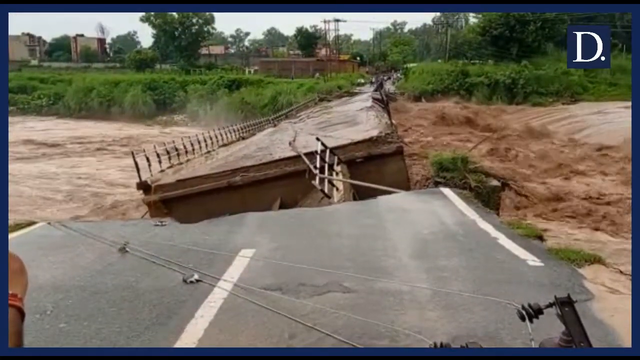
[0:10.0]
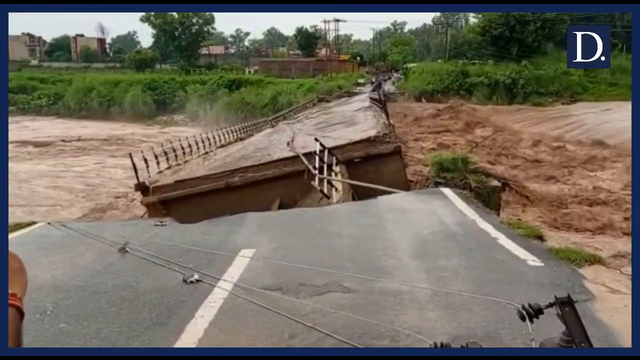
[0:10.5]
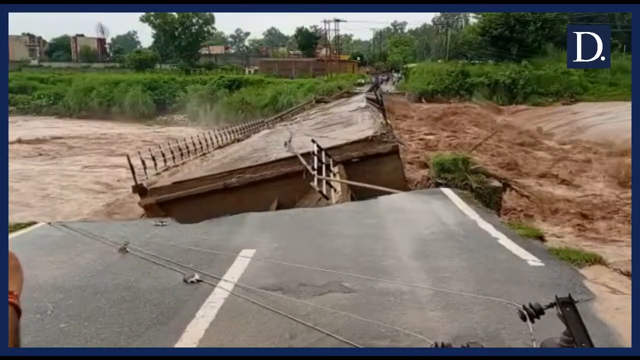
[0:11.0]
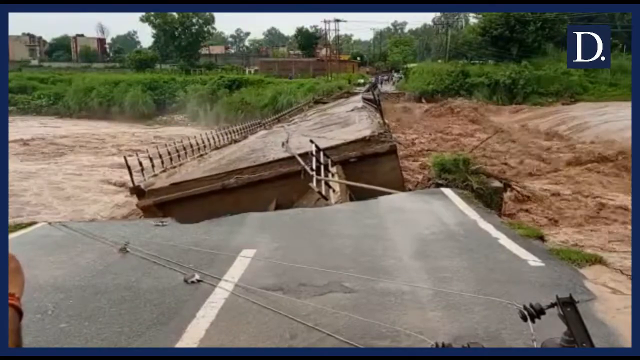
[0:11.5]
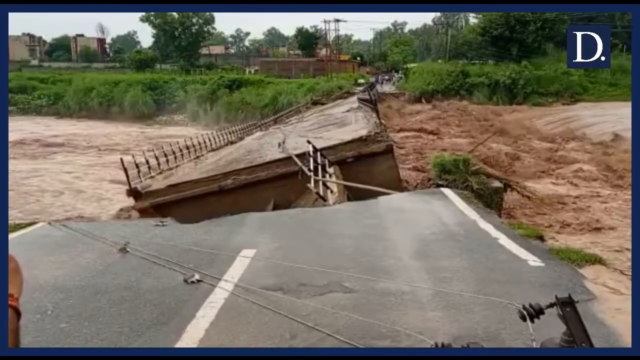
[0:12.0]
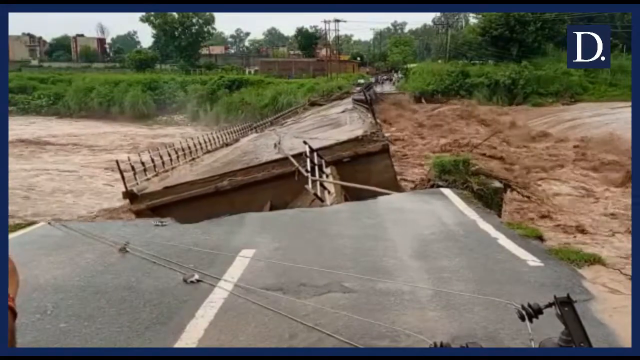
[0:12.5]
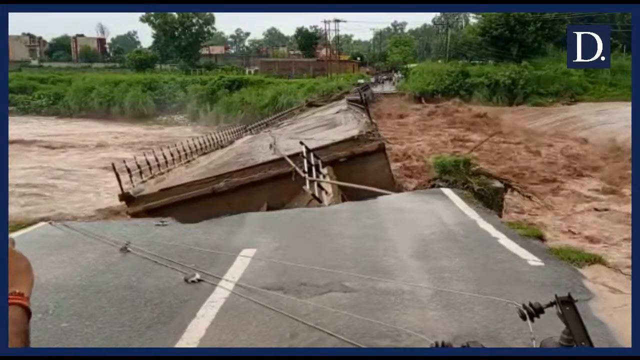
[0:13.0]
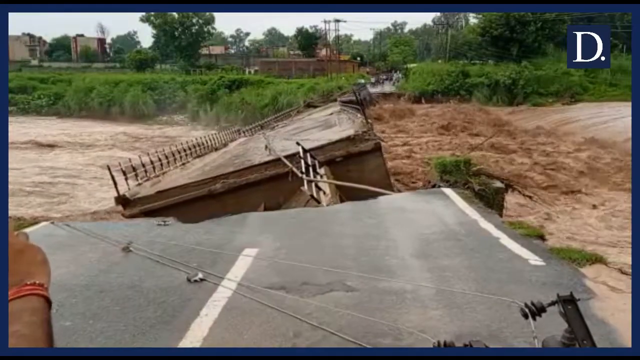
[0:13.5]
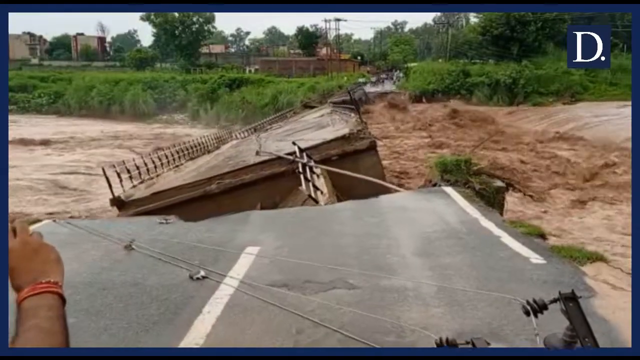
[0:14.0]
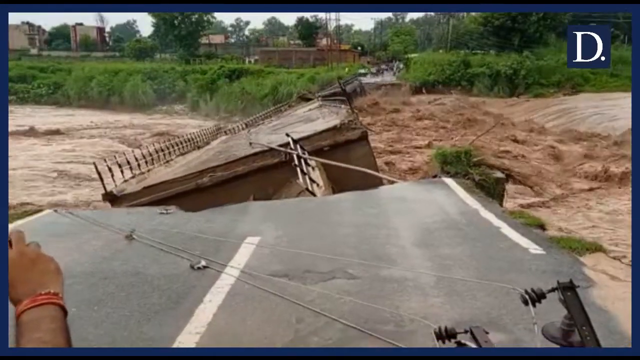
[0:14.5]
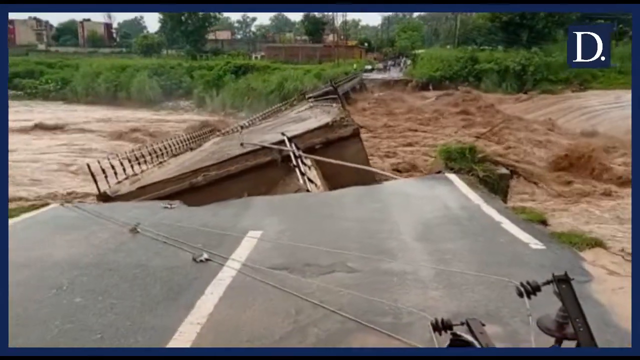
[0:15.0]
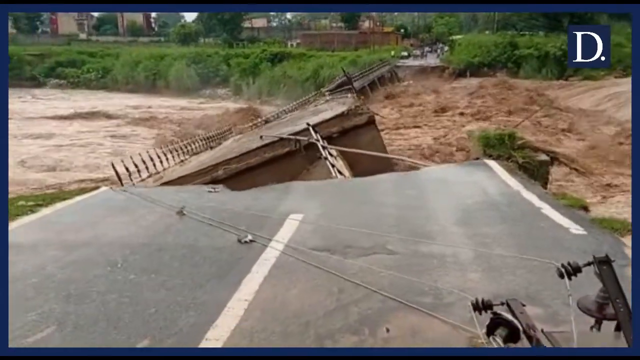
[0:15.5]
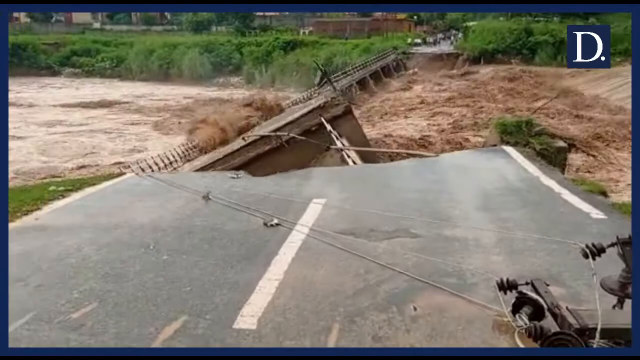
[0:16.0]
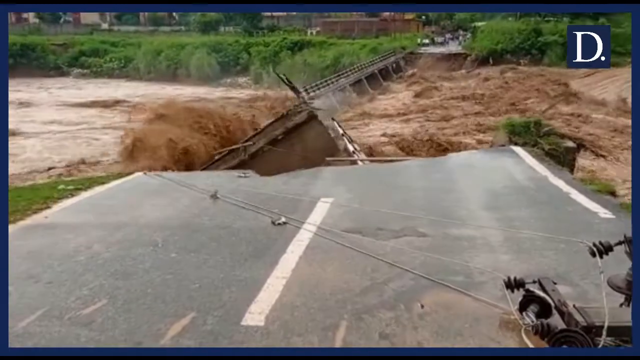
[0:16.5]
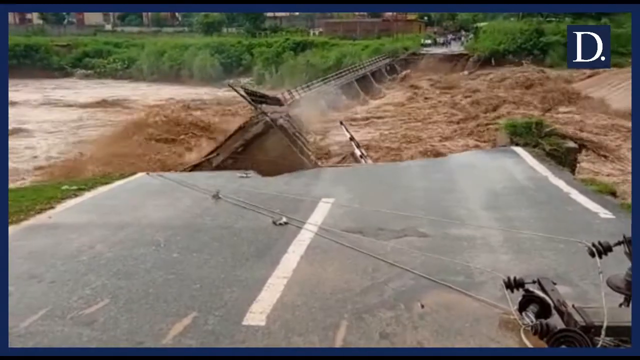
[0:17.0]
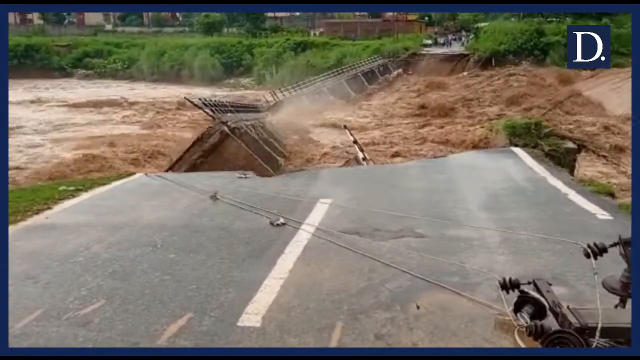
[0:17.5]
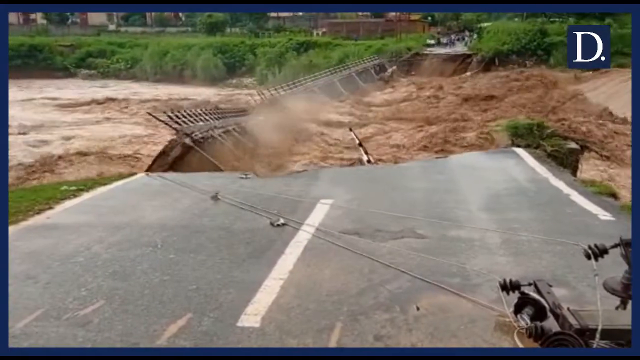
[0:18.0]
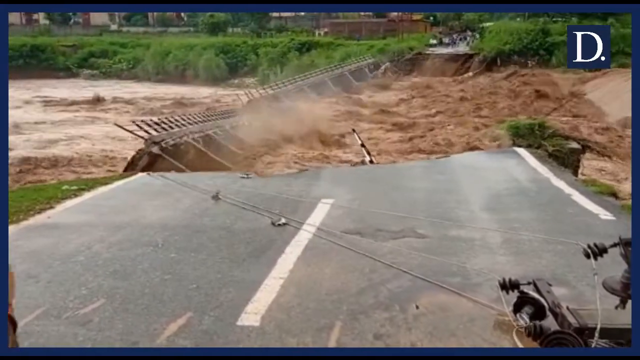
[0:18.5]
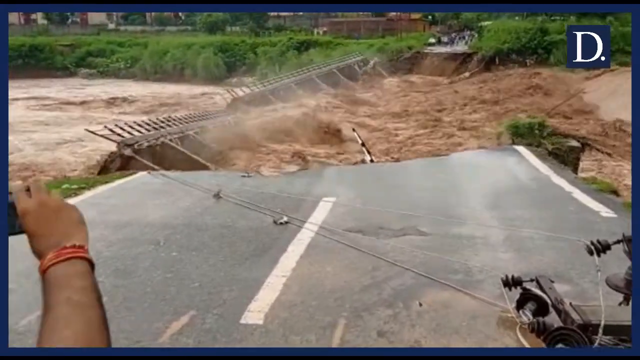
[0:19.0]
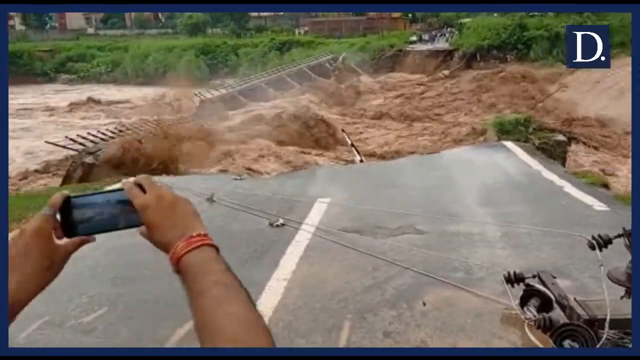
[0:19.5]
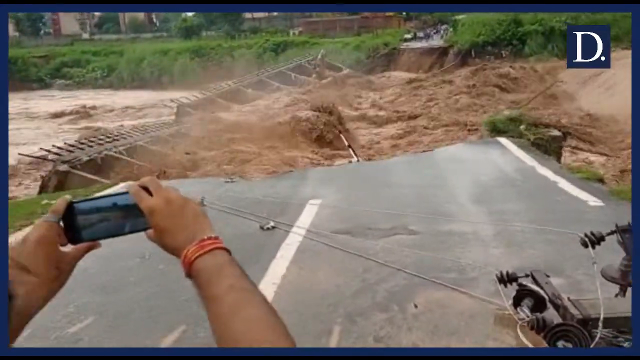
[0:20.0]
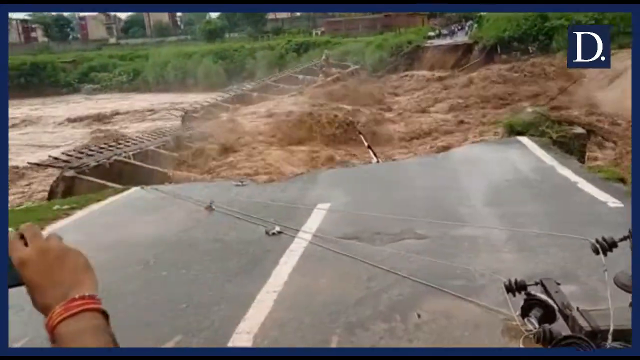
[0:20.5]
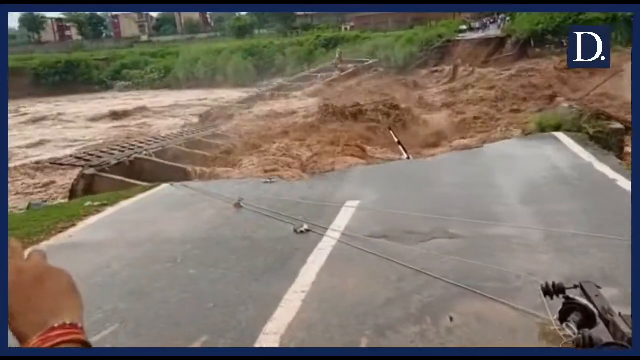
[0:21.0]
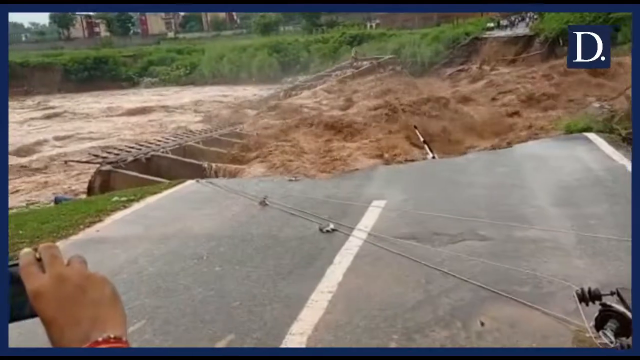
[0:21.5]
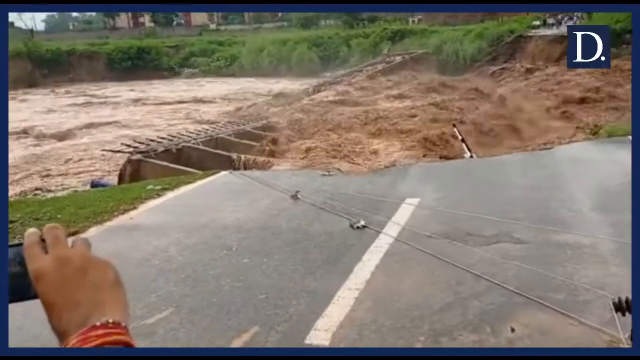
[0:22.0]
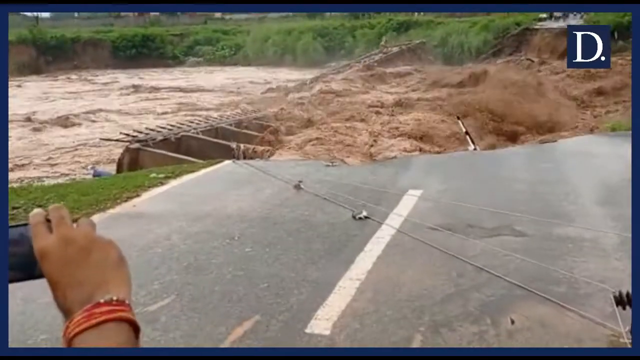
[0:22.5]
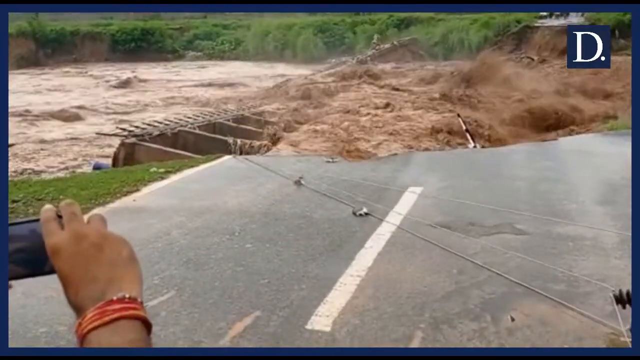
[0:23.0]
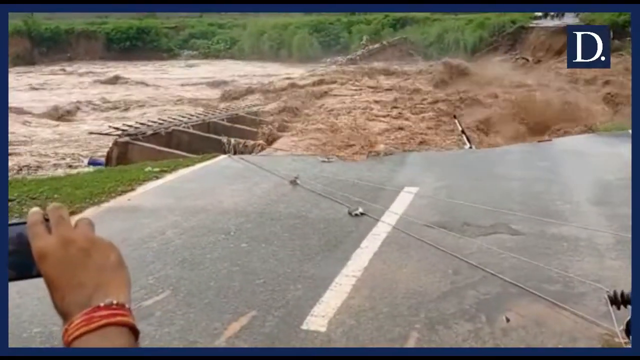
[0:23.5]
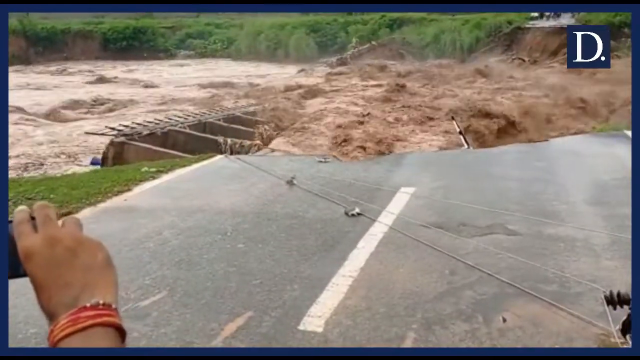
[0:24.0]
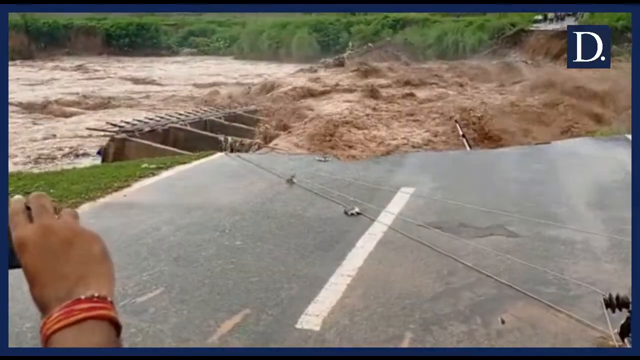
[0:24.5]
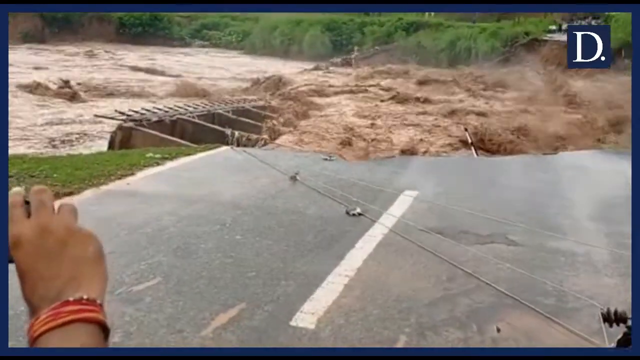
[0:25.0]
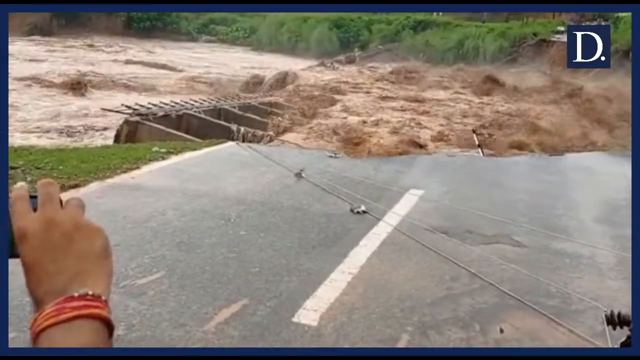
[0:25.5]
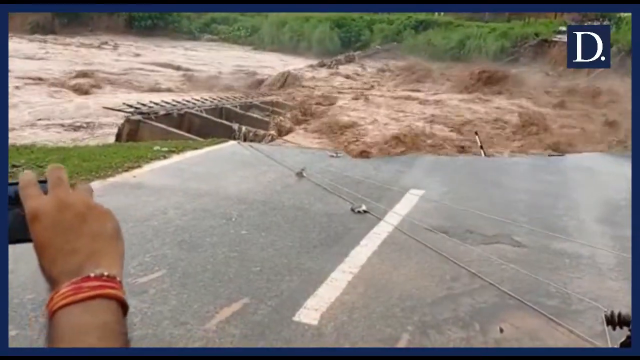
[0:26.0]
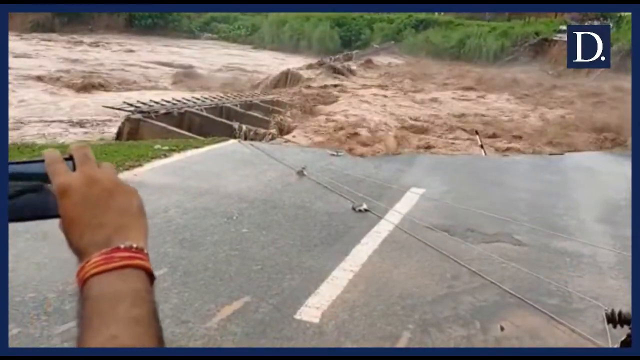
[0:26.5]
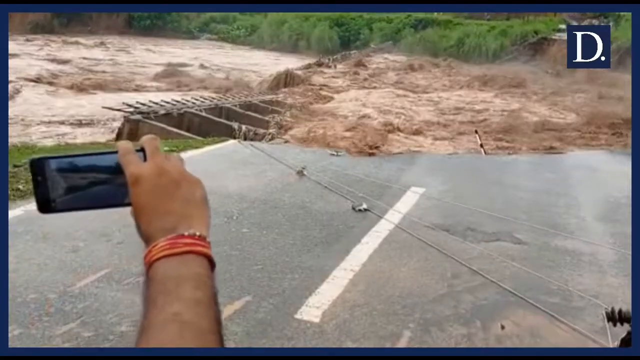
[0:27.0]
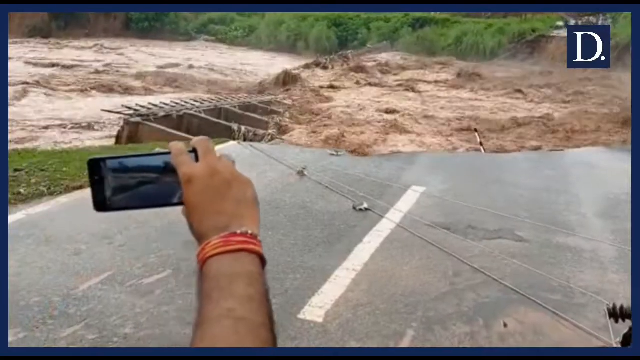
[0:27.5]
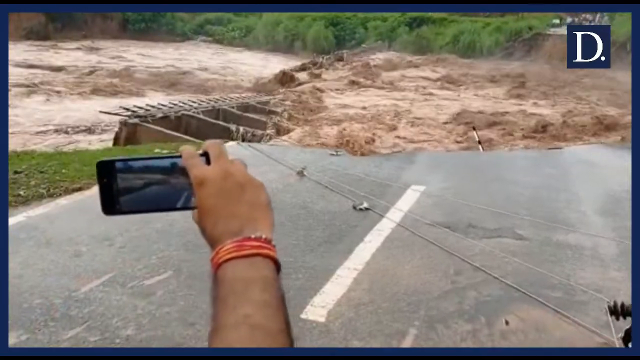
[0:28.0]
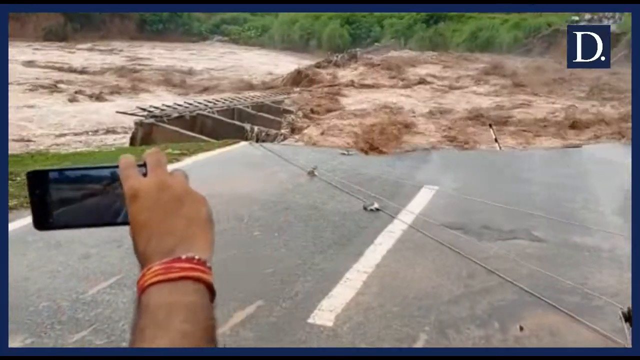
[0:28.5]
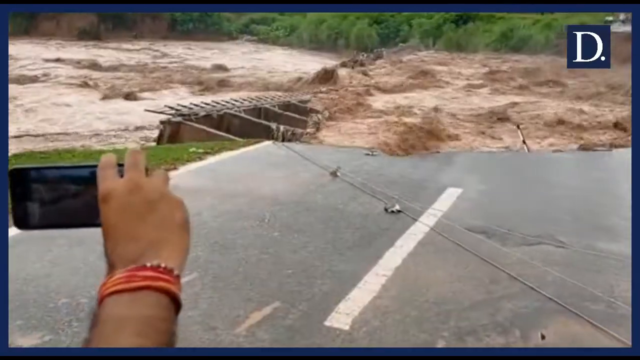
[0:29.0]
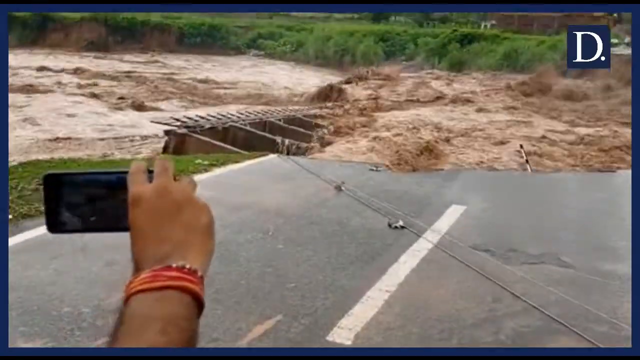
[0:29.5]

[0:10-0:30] The large river in flood continues. The river is higher on the right side than on the left, as it has been stopped by a bridge like a dam. The force of the water has split the bridge into two sections. The section at the top of the screen is moved by the pressure of the higher water on the right and is sent completely off into the waters below on the left side. With a huge splash, the bridge, now in two sections, lands in the water. The piece of bridge that has entered the water moves several metres away before it stops. The rest of the water then continues down to join the water on the left.